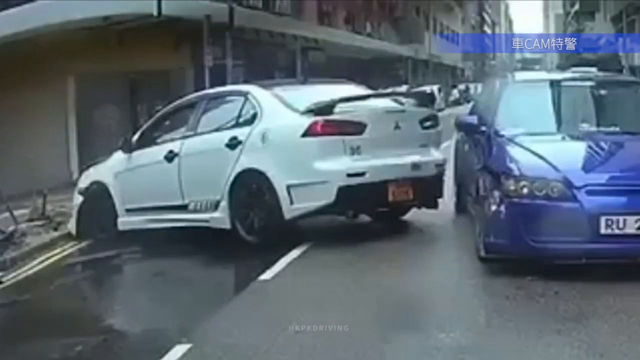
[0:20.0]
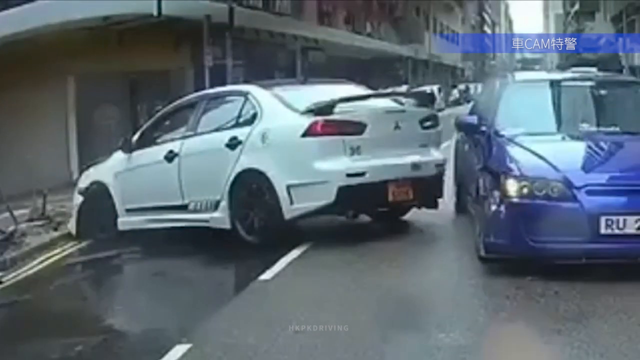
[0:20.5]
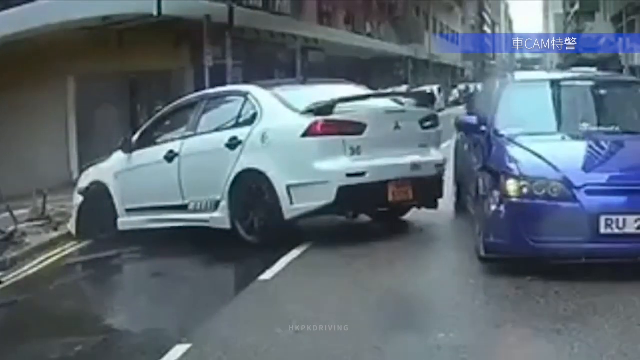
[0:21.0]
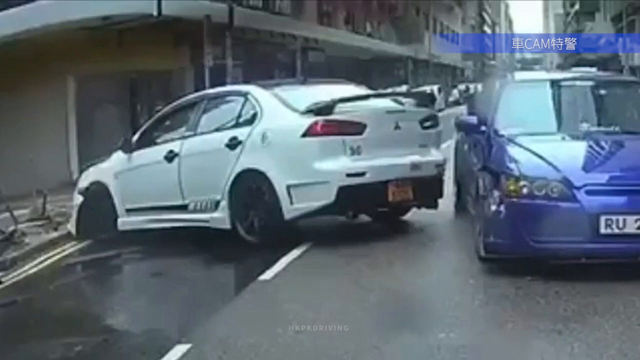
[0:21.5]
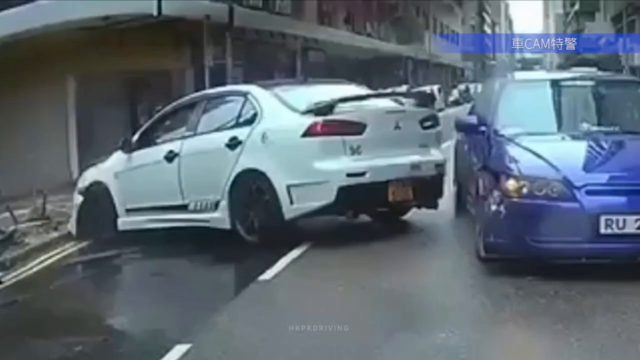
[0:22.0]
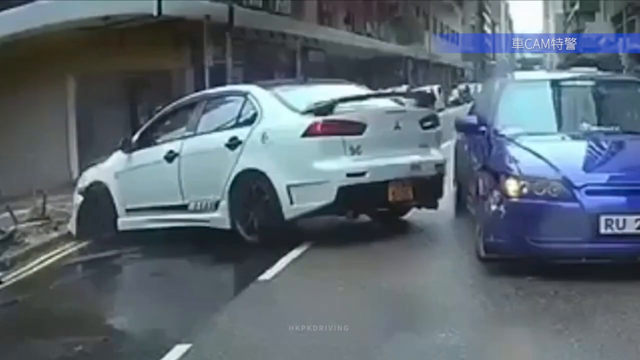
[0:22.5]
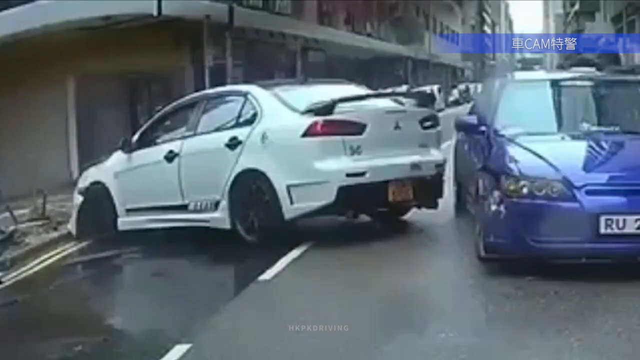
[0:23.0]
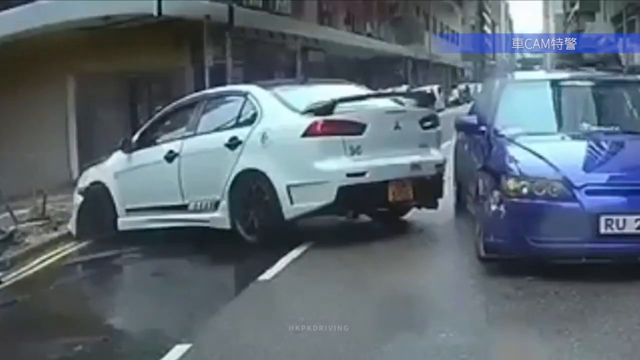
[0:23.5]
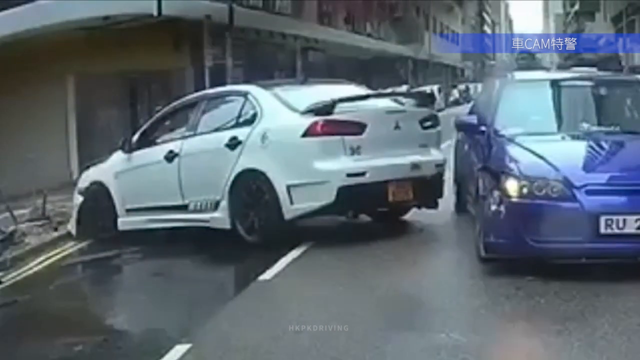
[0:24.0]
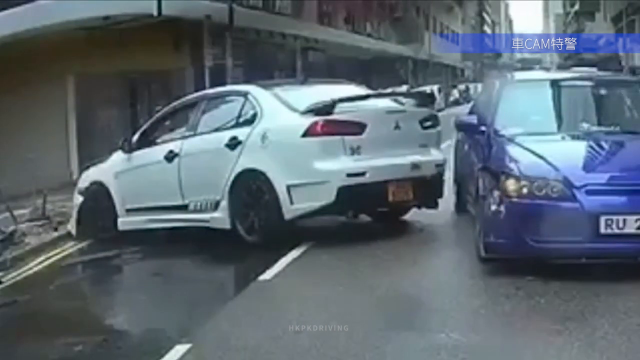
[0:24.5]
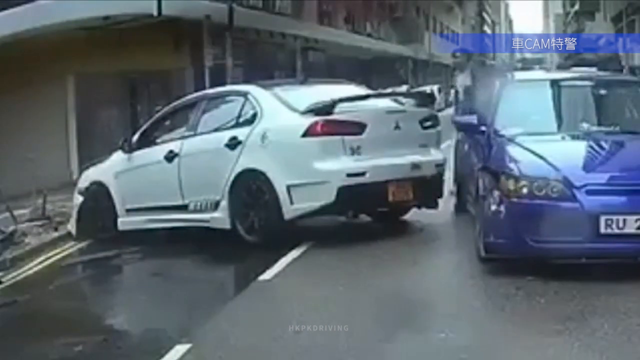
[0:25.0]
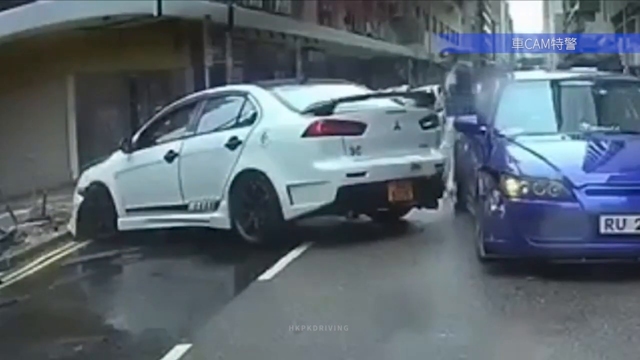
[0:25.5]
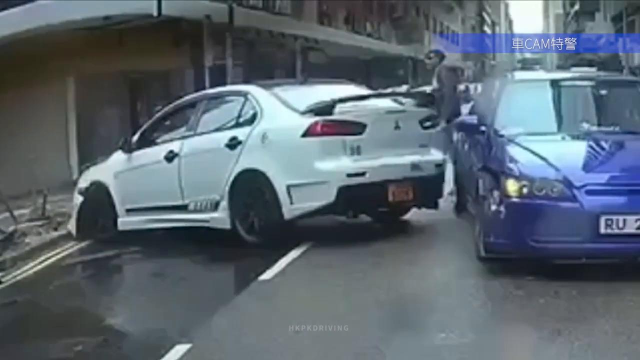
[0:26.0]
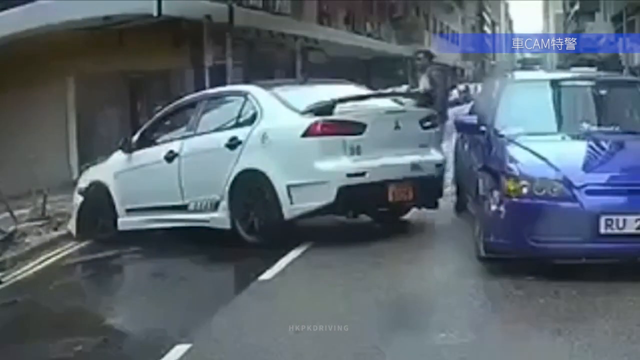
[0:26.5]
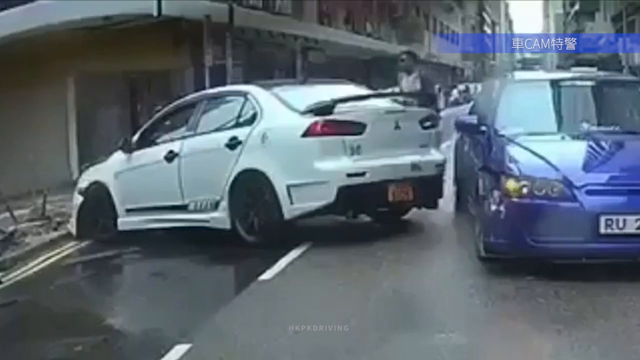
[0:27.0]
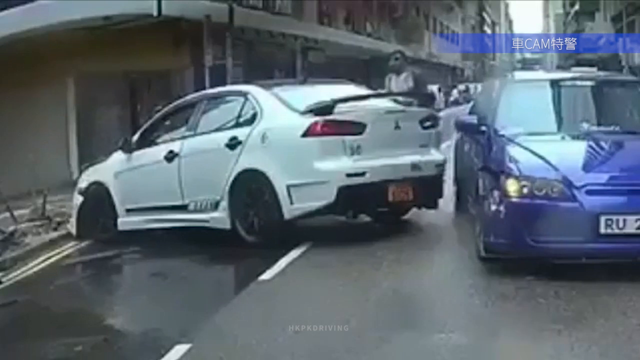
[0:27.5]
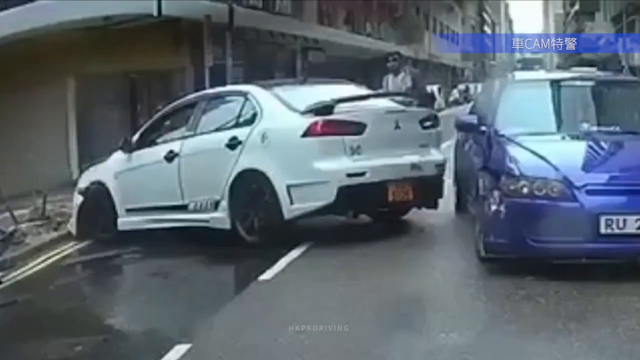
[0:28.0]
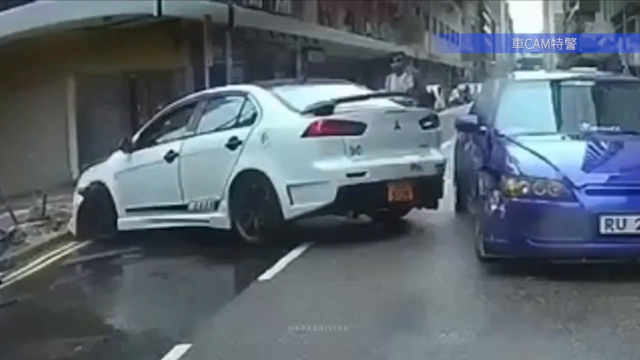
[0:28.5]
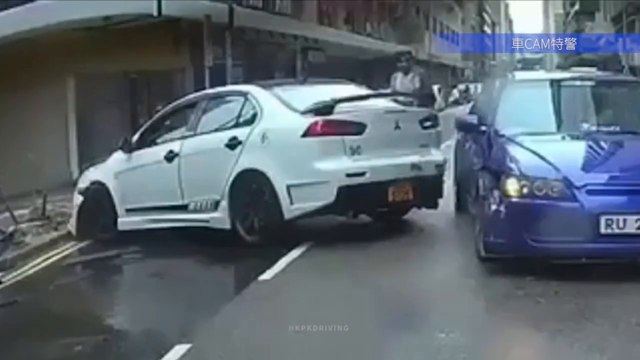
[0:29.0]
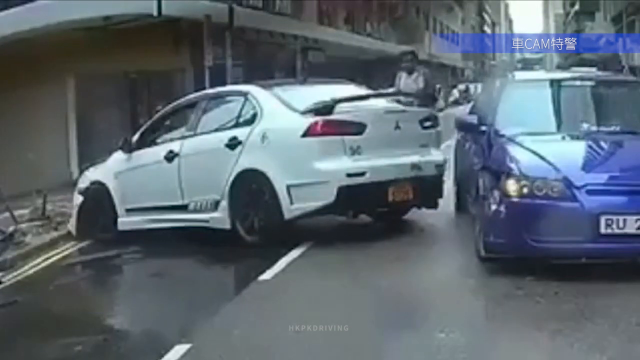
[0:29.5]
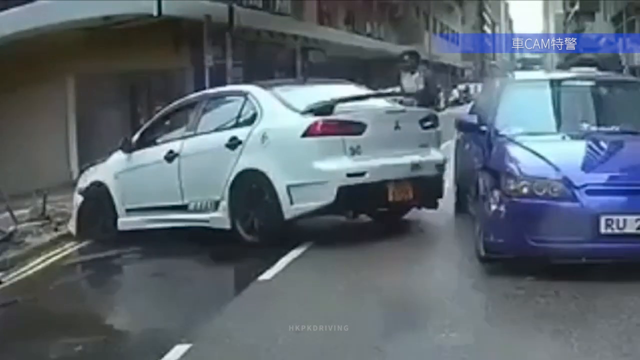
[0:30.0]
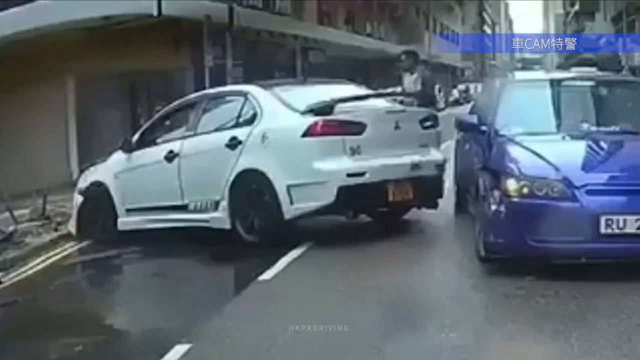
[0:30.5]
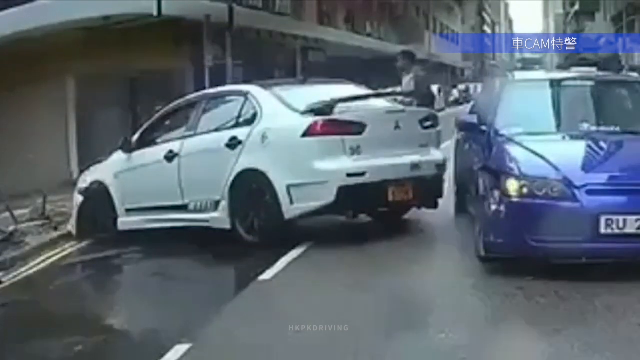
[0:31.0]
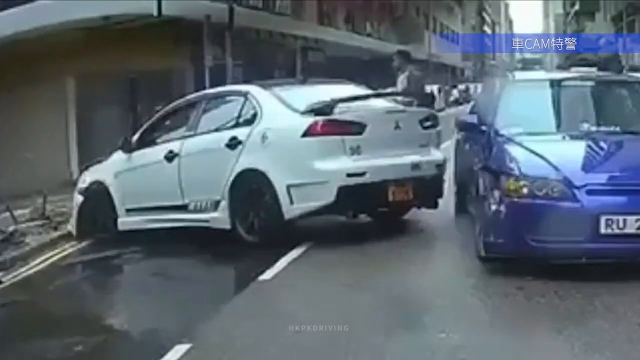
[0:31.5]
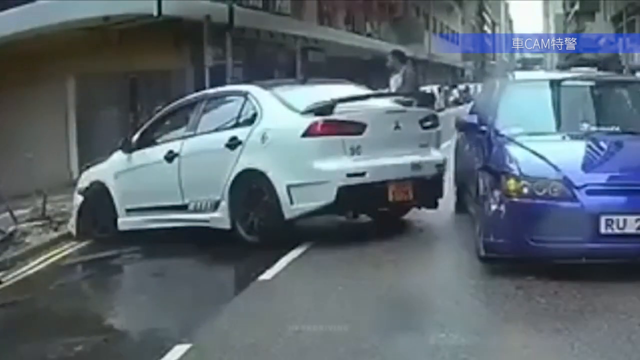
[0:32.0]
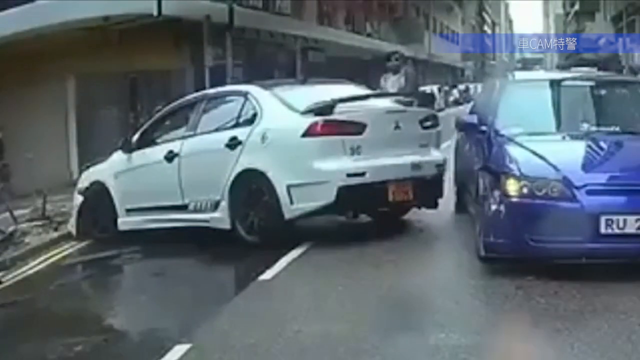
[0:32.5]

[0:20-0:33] The driver of the blue car exits the vehicle and slowly approaches the other car on the passenger side. He appears to be looking around, seemingly checking whether anyone else saw the crash happen. In the background, another individual walks up the sidewalk and appears to be approaching the scene. The damage the white car has done to the side of the road is visible. The driver of the blue car appears to be wearing sunglasses, a black jacket, and a lighter colored shirt. The footage appears to come from a street camera, possibly mounted on a light.